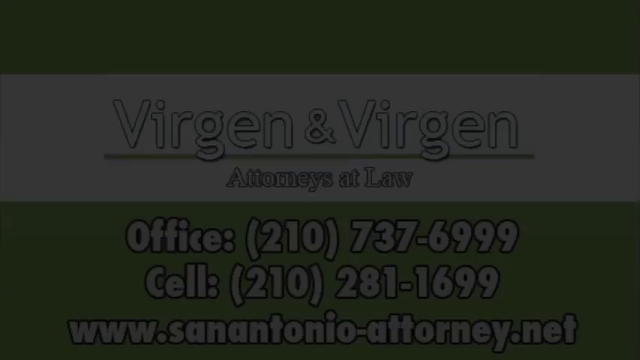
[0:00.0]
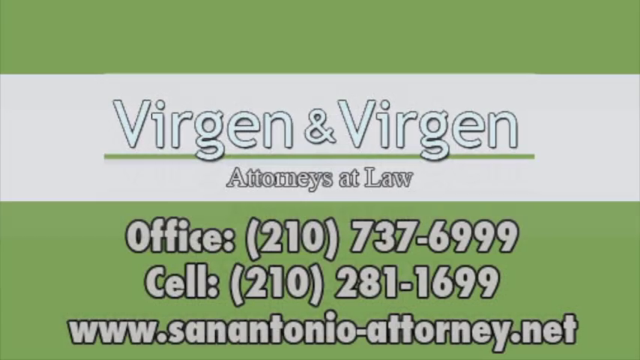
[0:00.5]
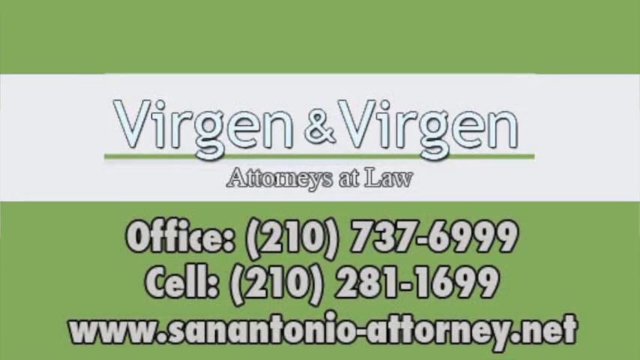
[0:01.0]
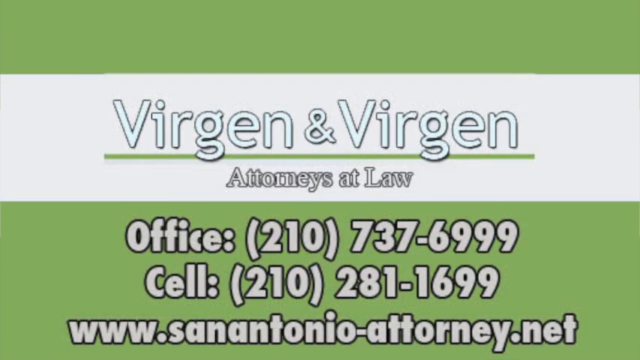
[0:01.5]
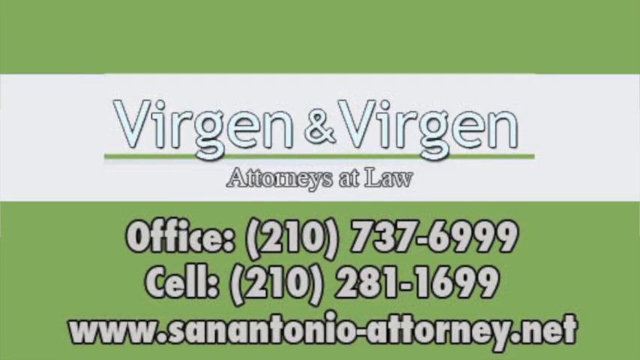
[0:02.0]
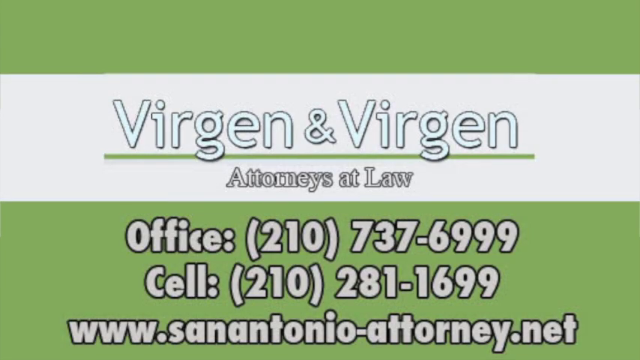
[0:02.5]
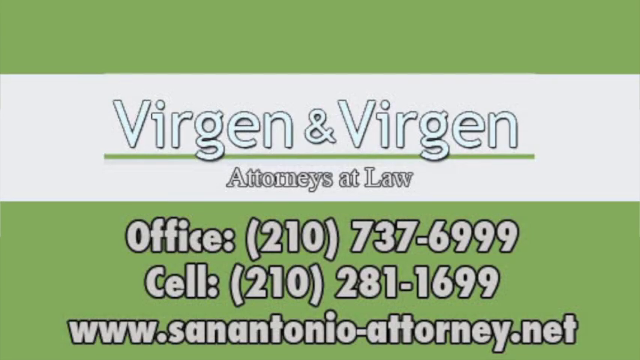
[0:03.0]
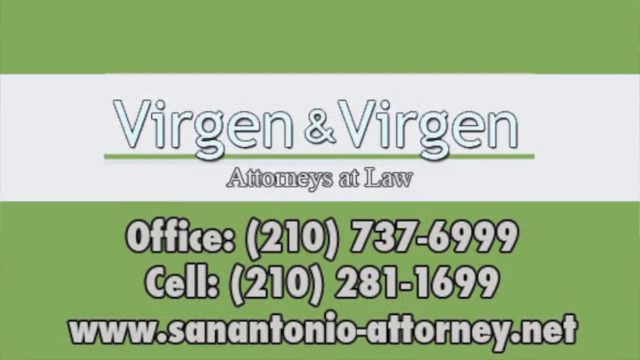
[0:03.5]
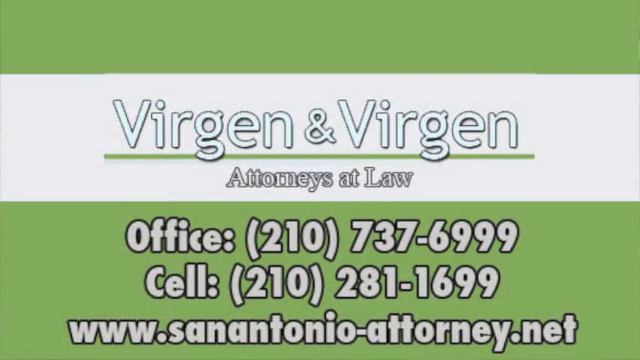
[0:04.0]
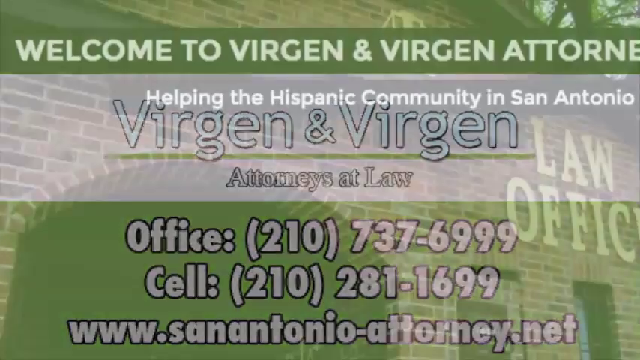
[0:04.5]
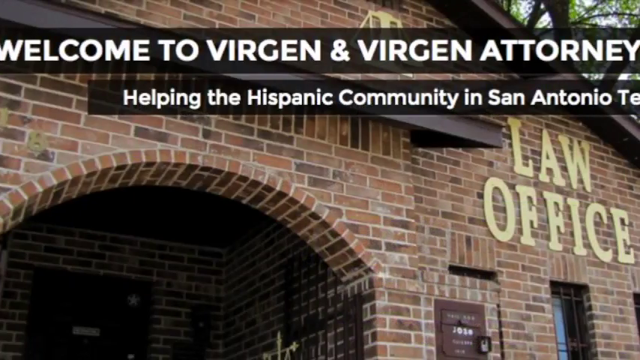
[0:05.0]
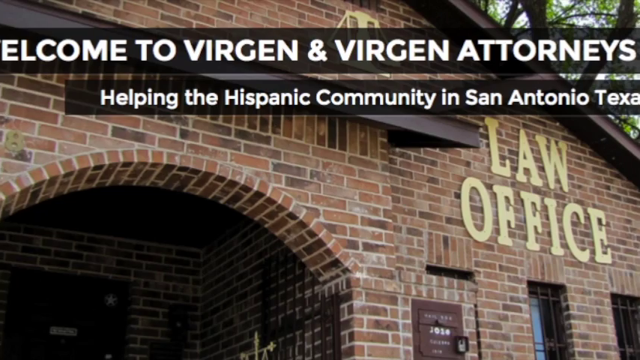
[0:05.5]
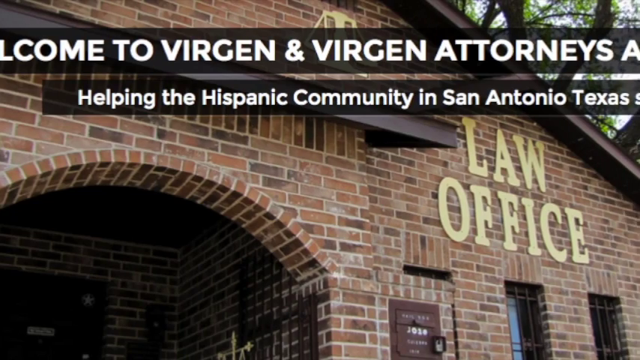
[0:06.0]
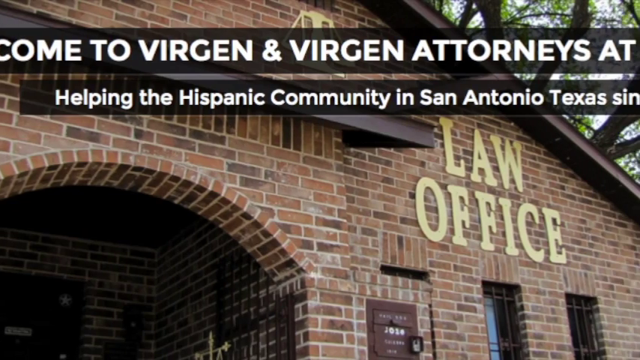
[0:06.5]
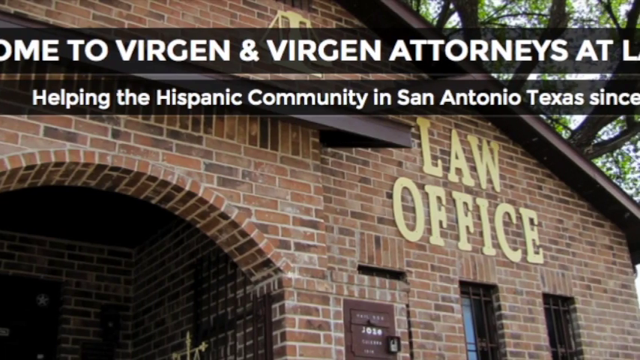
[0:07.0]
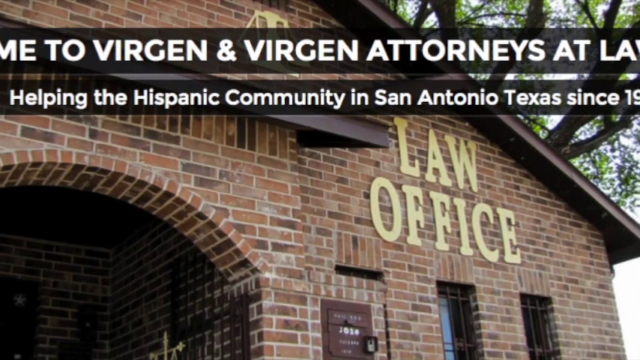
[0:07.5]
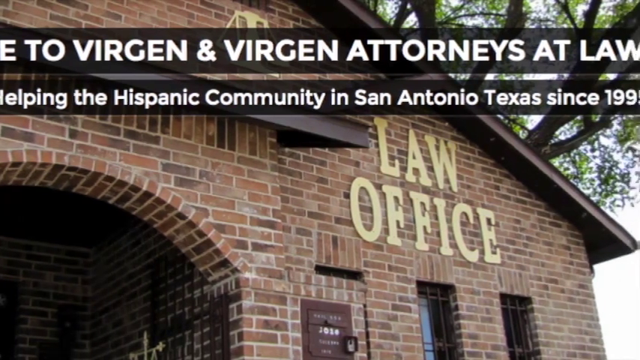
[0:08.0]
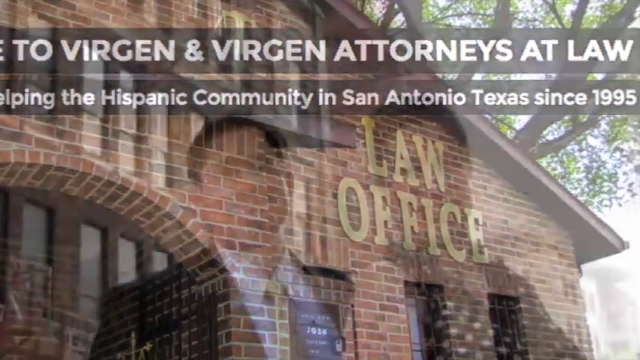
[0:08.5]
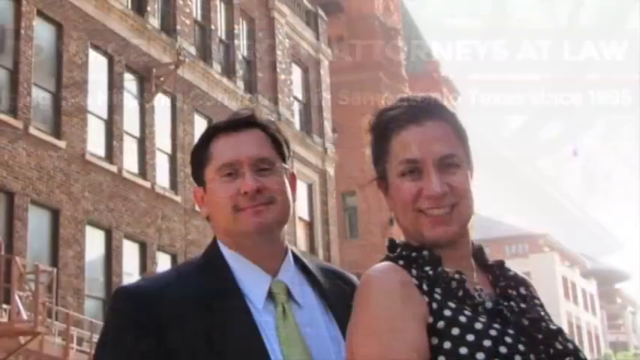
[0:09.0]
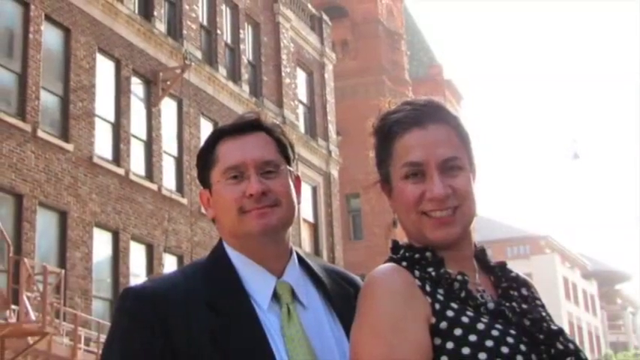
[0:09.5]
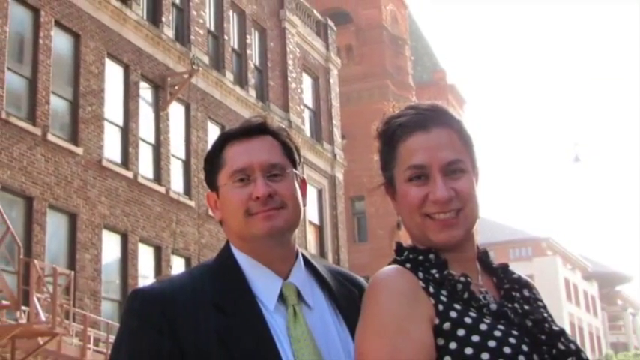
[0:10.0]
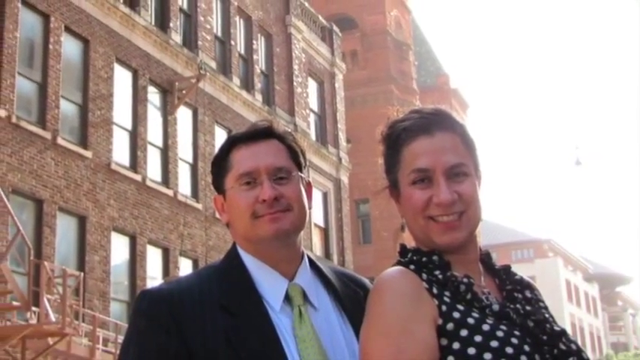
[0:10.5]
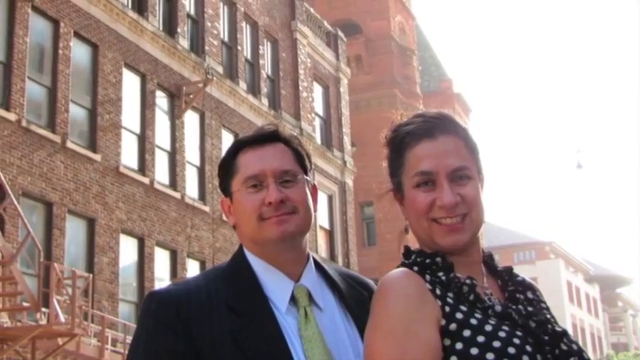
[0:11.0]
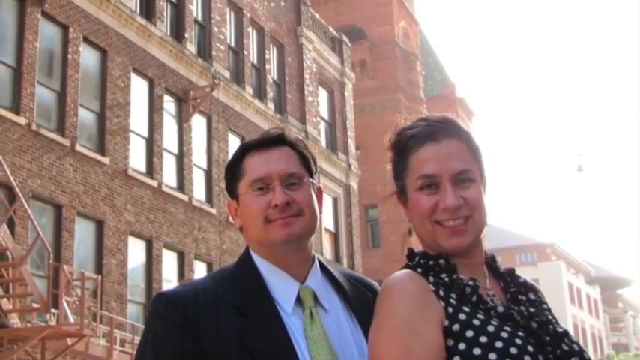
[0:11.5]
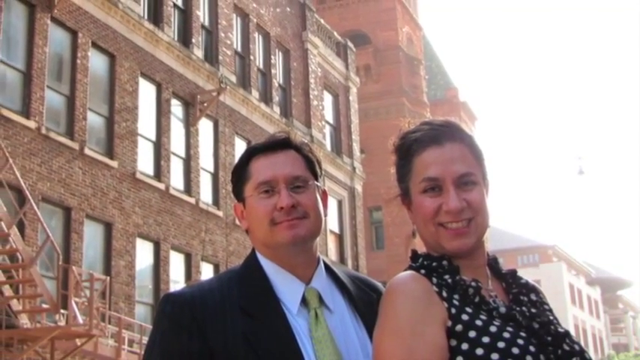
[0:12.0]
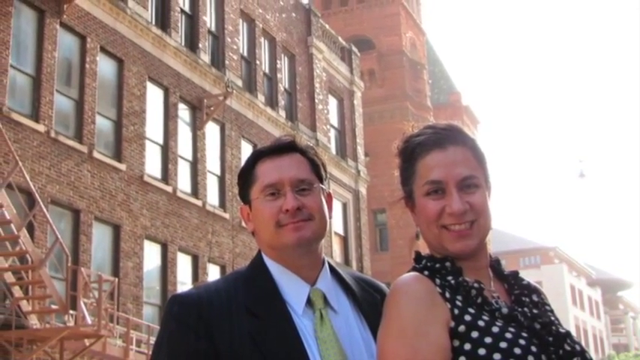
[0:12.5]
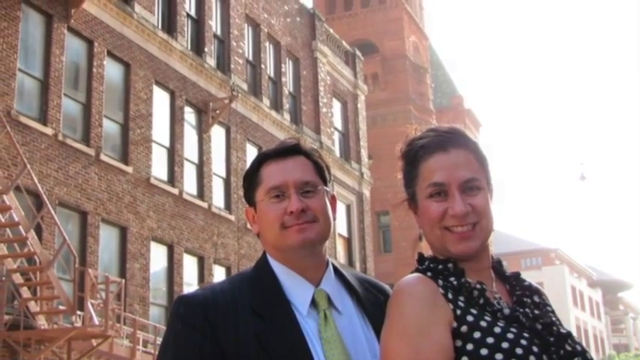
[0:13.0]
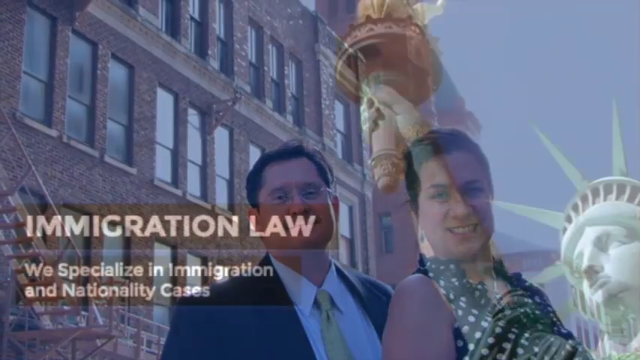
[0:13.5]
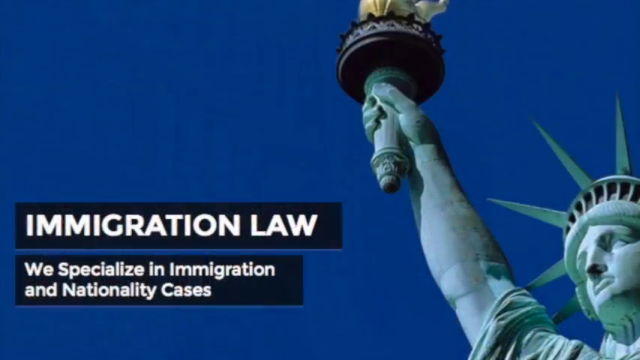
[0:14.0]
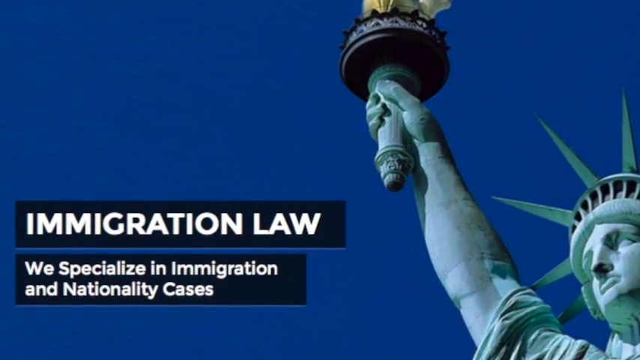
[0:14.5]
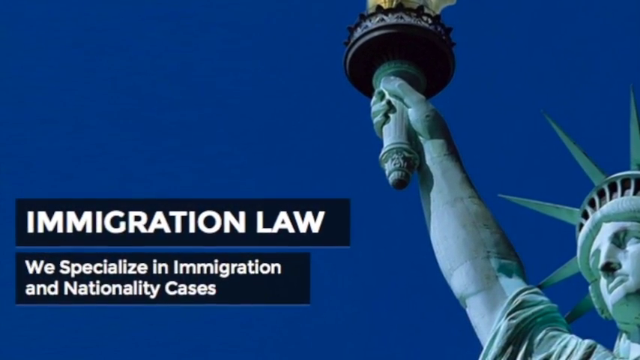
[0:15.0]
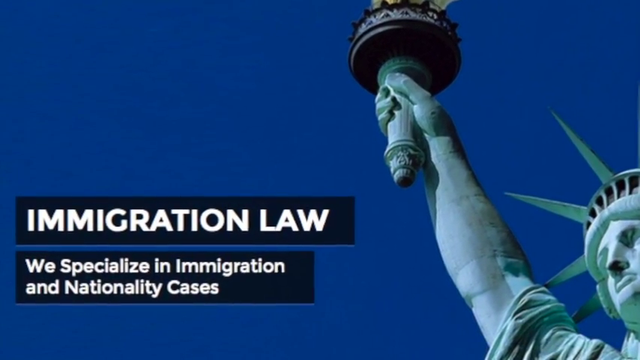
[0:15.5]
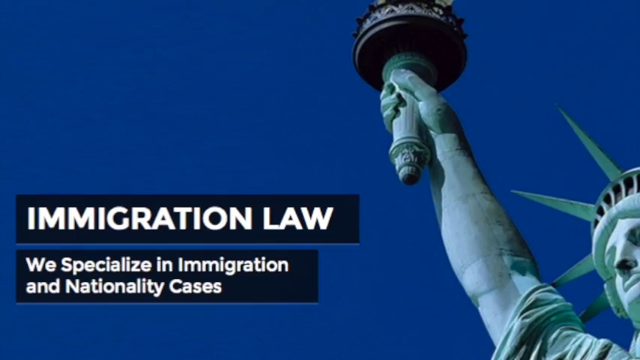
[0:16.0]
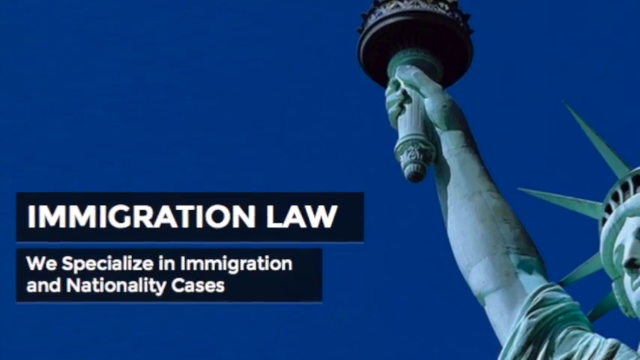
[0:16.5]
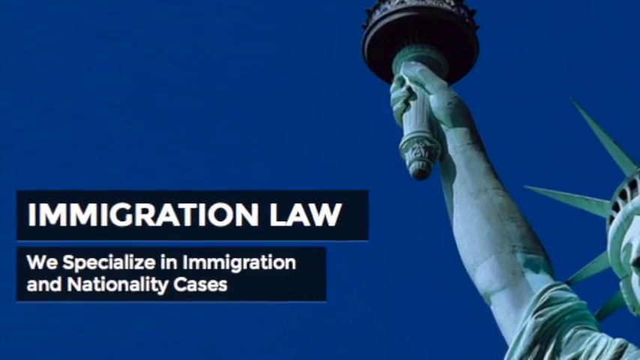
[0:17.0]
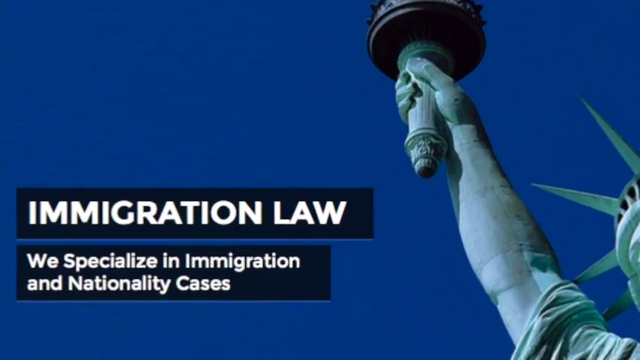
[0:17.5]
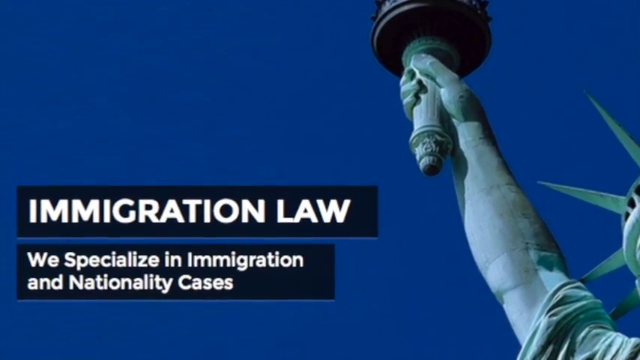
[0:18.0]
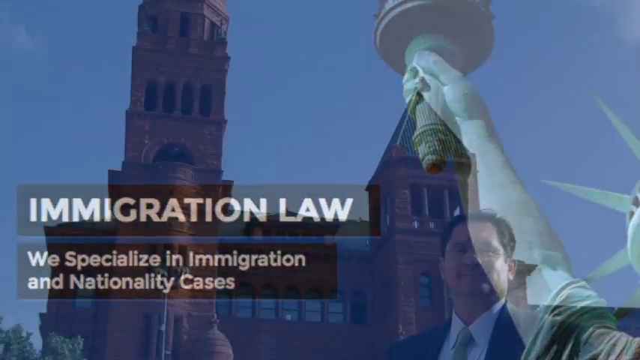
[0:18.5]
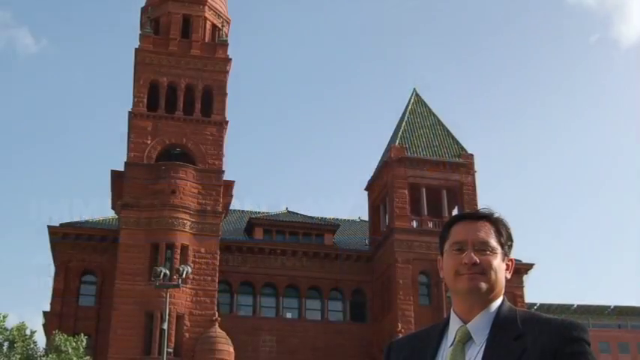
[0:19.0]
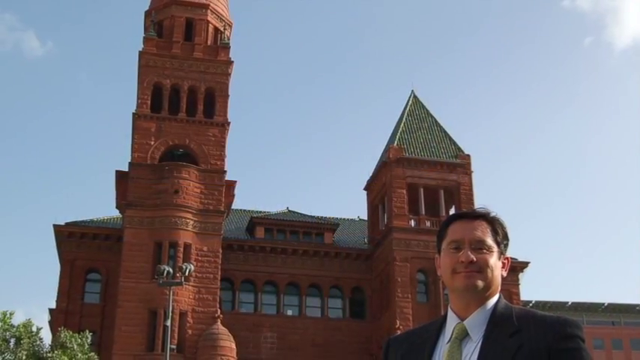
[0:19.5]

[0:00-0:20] This appears to be a commercial-style video for an attorney, Virgen and Virgen. The title slide has a somewhat green look, green mixed with a little yellow. Across the middle is a white strip reading "Virgen and Virgen Attorneys at Law" in white text with a black outline. Below it, the office number and cell number appear in bold white text, also with a black outline. The video then shows a still shot of the law office being panned and zoomed from the left to the right side, along with a picture of what looks to be a husband and wife, possibly the Virgen and Virgen of the commercial. The third slide zooms in from a Statue of Liberty photo toward the left side, where "immigration law" appears in white text on a black horizontal bar, suggesting they specialize in immigration law. Underneath it reads "we specialize in immigration and nationality cases" in the same white lettering with black outline shading. The video then briefly shows the husband in front of some type of building or vacation spot.